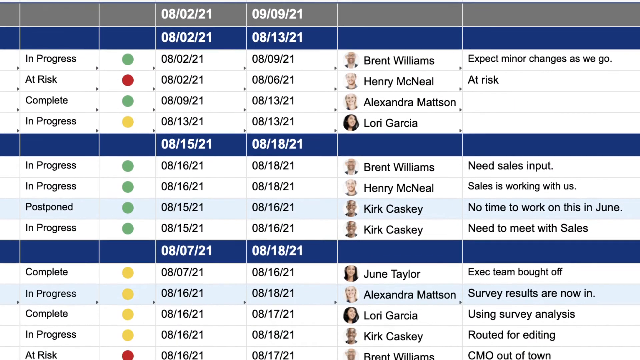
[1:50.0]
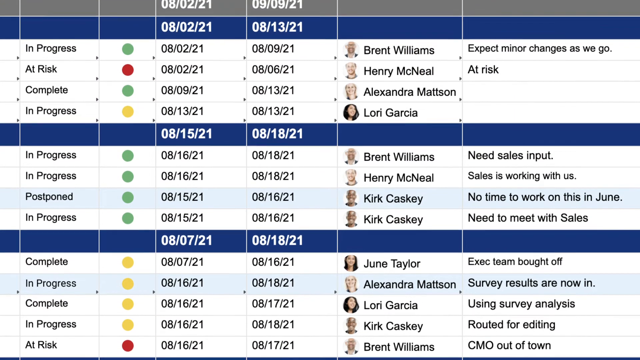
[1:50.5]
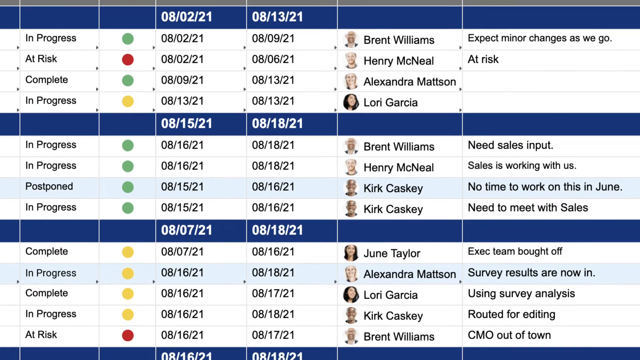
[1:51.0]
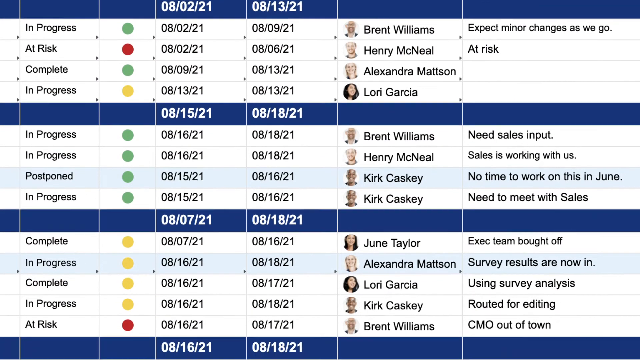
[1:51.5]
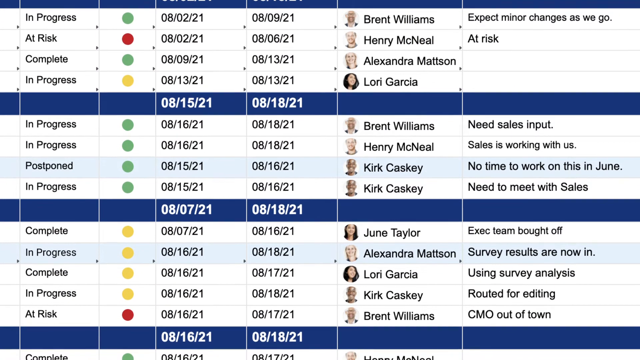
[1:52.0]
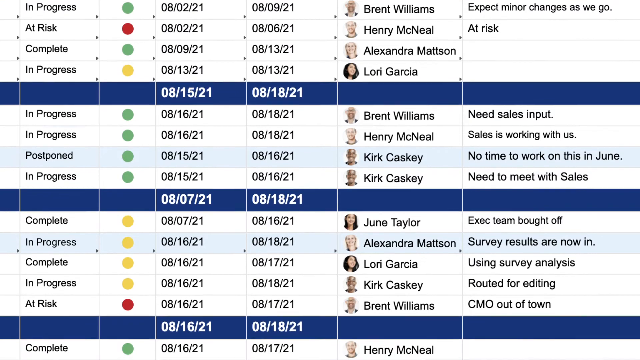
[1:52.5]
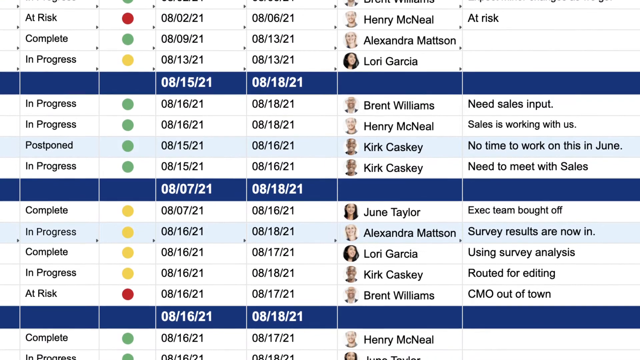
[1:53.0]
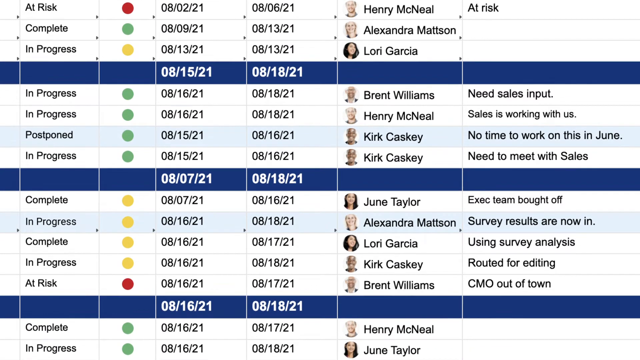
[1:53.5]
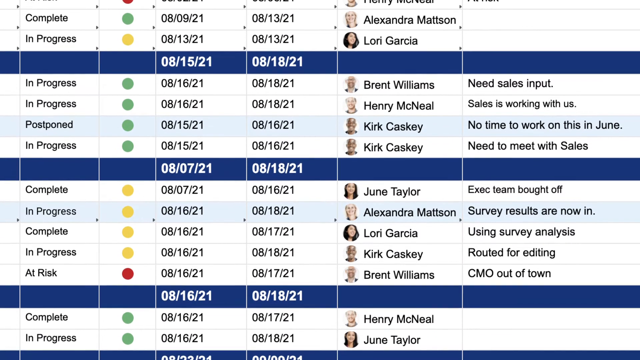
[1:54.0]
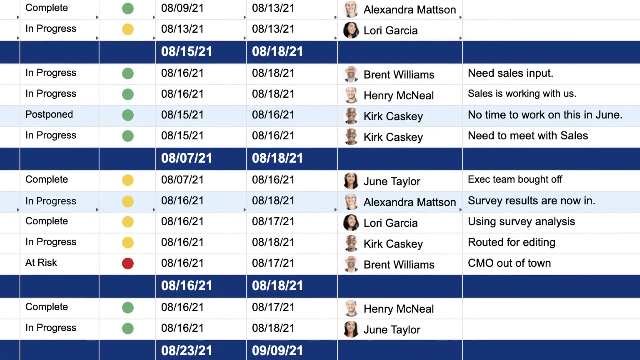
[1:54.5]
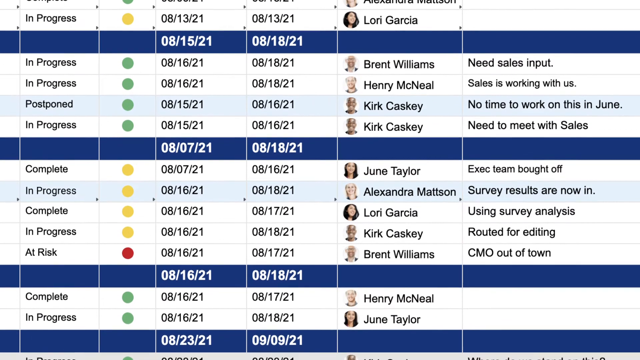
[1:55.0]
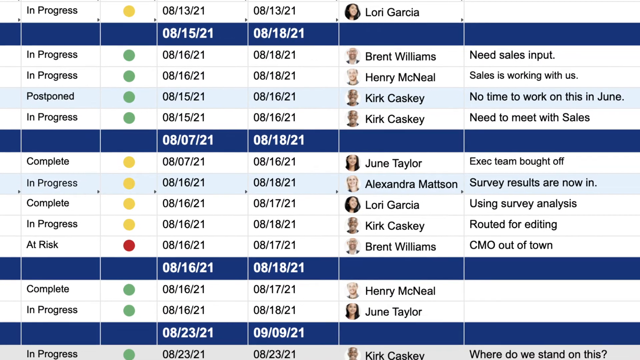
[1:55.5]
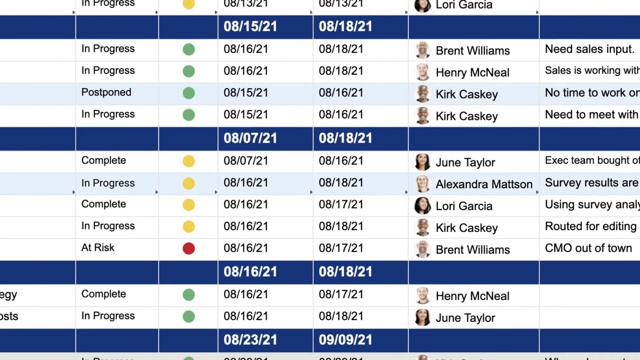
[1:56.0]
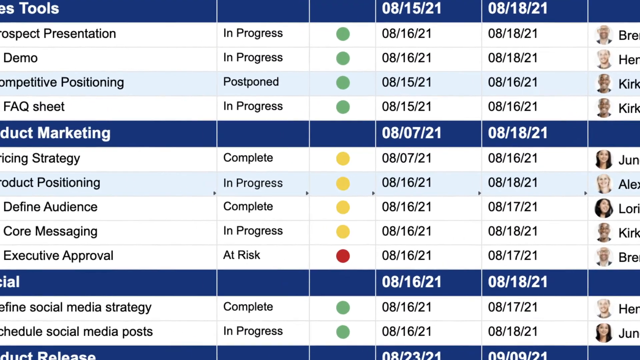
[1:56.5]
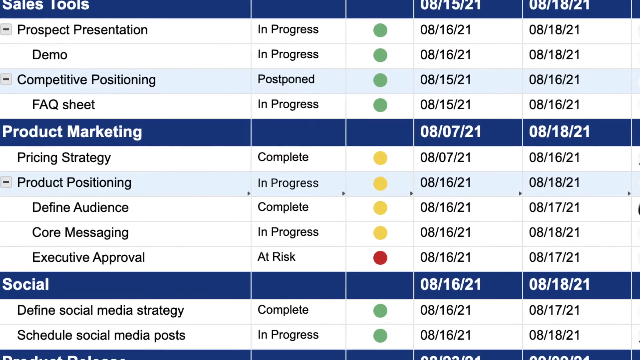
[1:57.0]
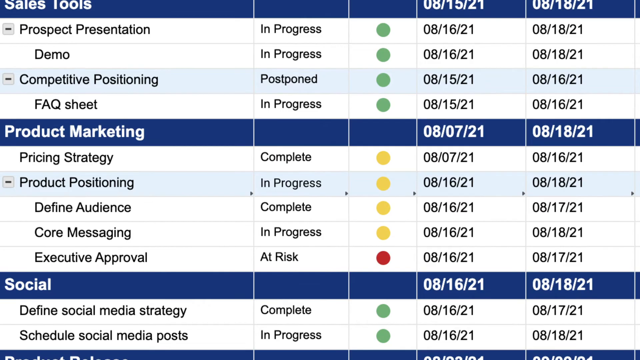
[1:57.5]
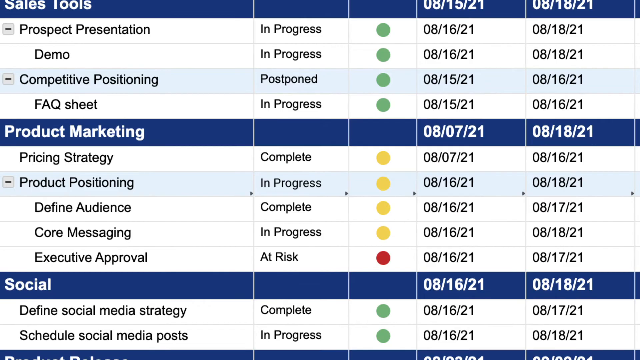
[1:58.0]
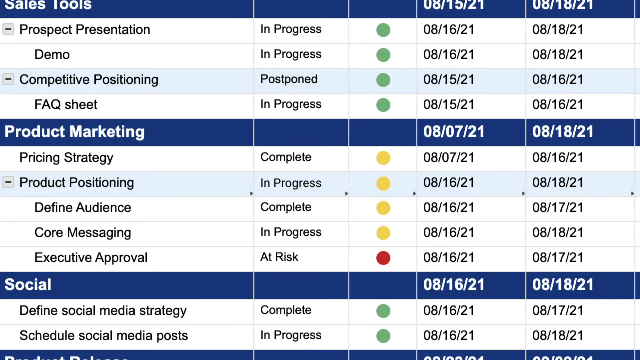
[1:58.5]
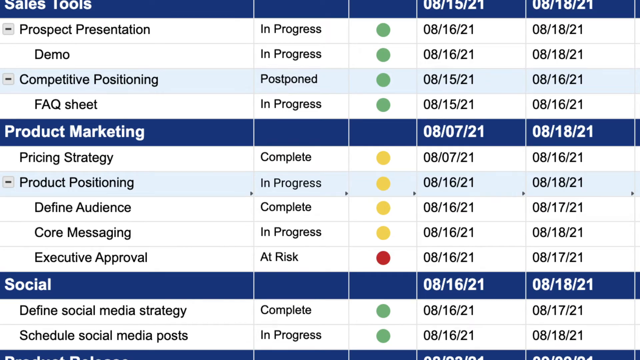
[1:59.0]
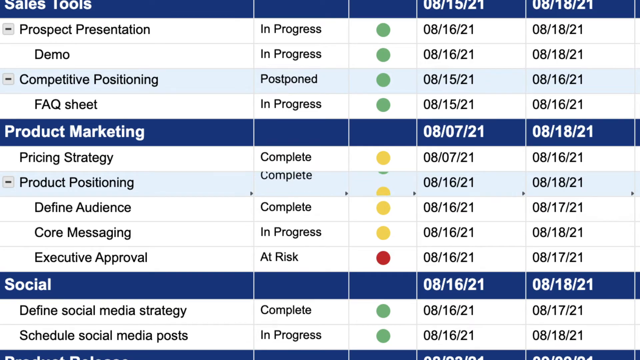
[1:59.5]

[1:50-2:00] More of the Smartsheet data is shown as it goes to product marketing: pricing strategy is complete, product position is in progress, defined audience is complete, core messaging is in progress and executive approval is at risk. All of this is dated between August 7, 2021 and August 18, 2021. Everything is organized, color-coded and detailed.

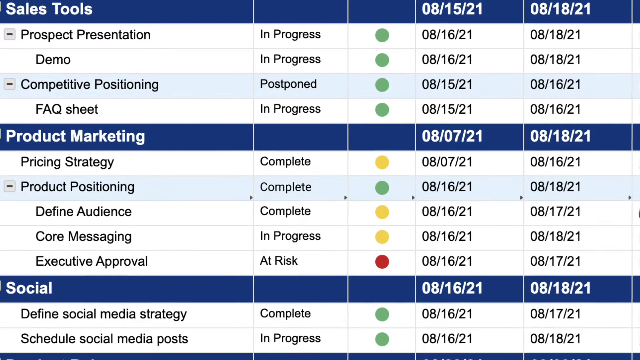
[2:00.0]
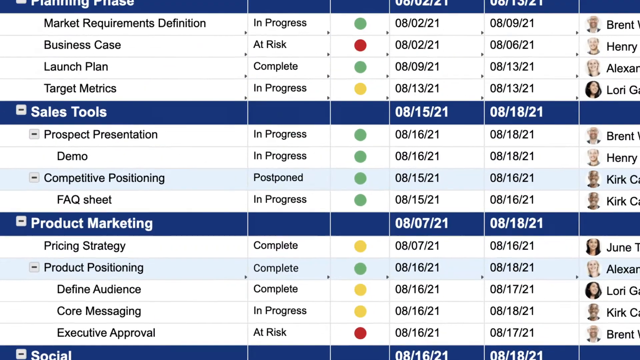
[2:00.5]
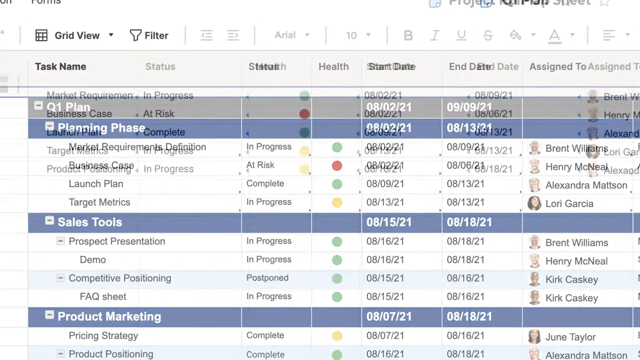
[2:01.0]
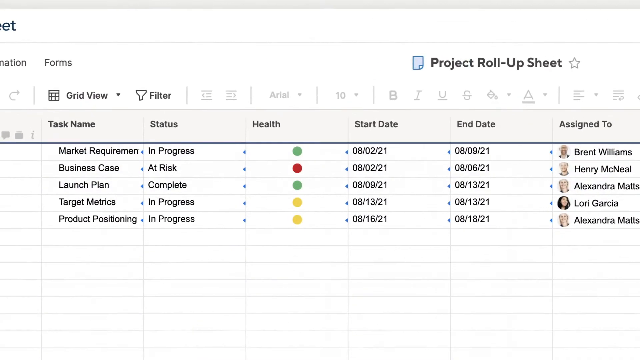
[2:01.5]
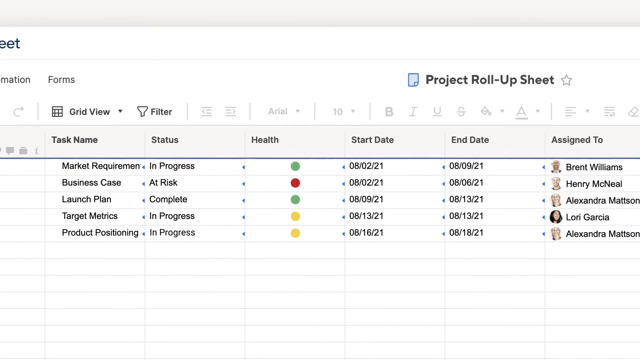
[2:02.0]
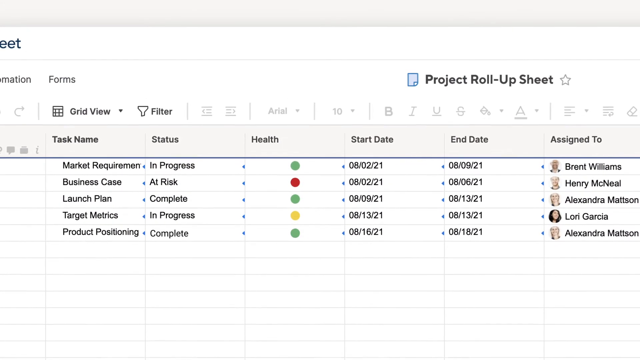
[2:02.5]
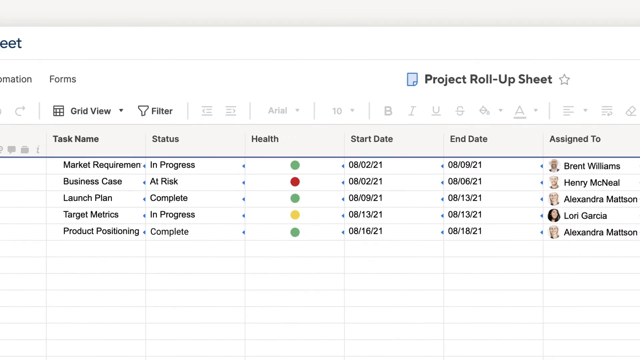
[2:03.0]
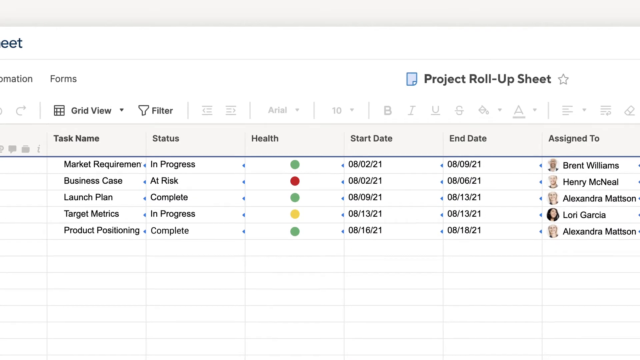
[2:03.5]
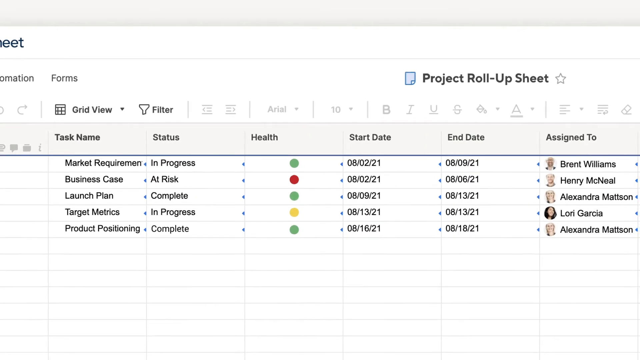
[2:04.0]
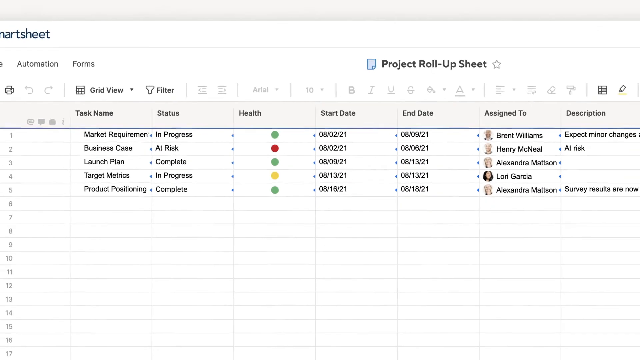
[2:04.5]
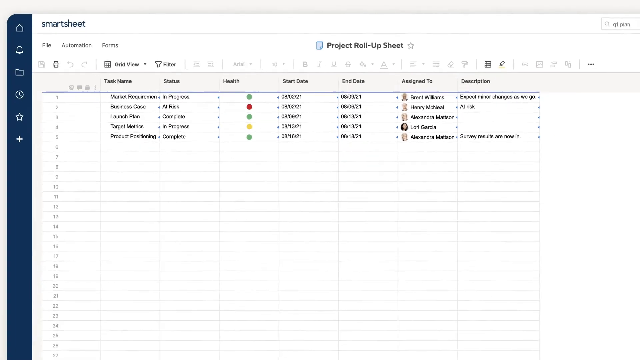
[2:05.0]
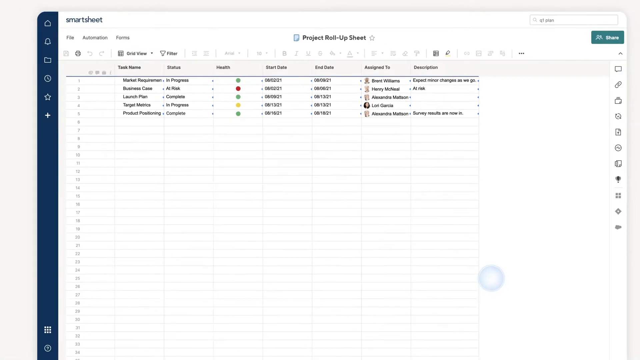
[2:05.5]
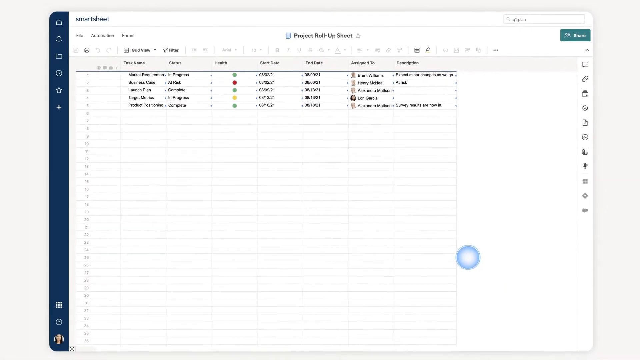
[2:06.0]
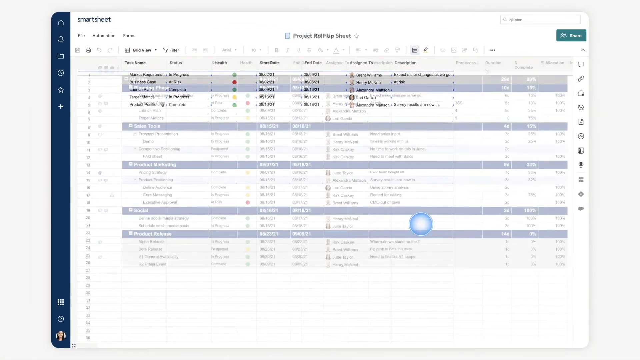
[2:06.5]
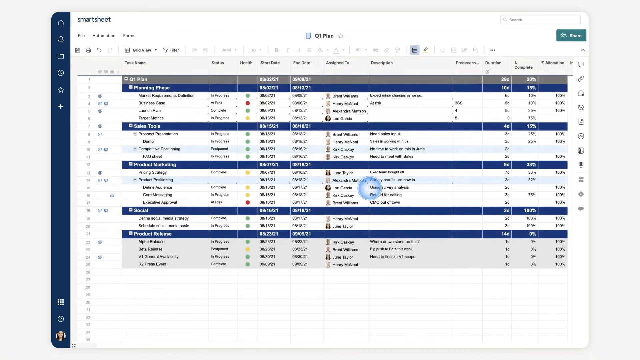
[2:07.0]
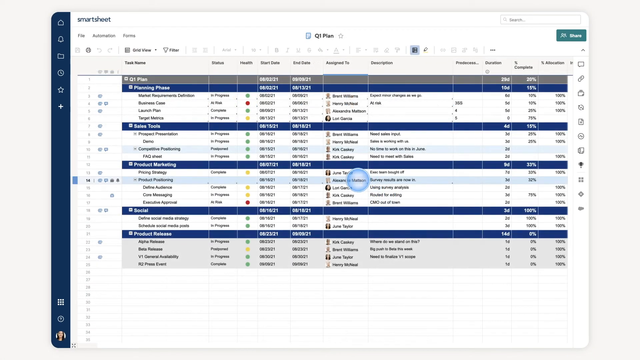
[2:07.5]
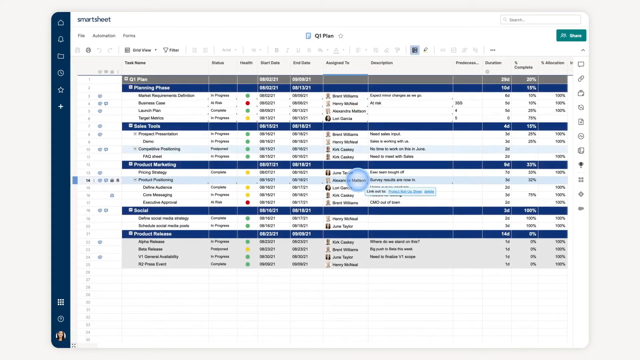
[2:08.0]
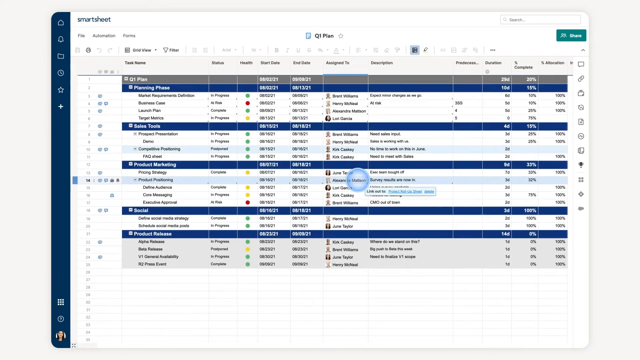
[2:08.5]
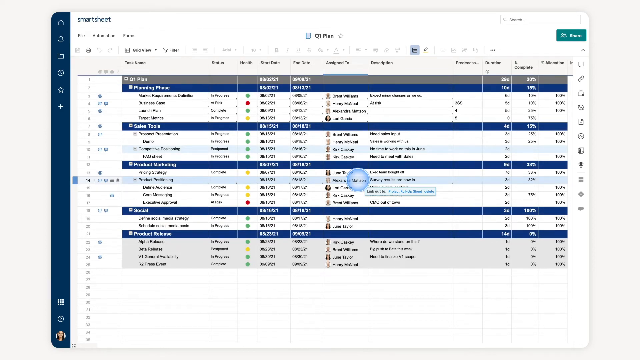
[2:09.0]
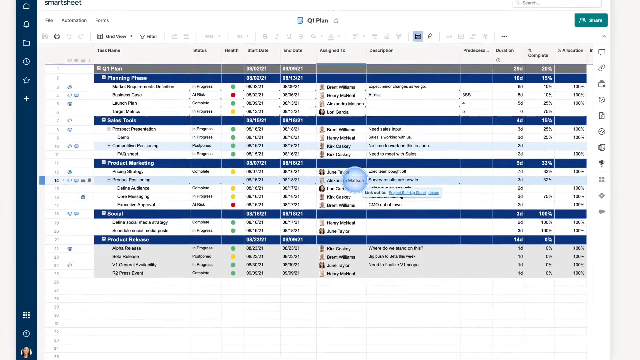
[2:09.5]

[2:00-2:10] The sheet shows market requirements in progress with a green circle, business case at risk with a red circle, launch plan complete with a green circle, target metrics in progress with a yellow circle, and product position complete with a green circle. Brent Williams is on the market requirement, Henry McNeil on the business case, Alexandra Mattson on the launch plan, target metrics are assigned to Lori Garcia, and product position is assigned to Alexandra Mattson. This is on the project roll-up sheet. It then goes to the Q1 plan, with the planning phase, sales tool, product marketing, social and product release.